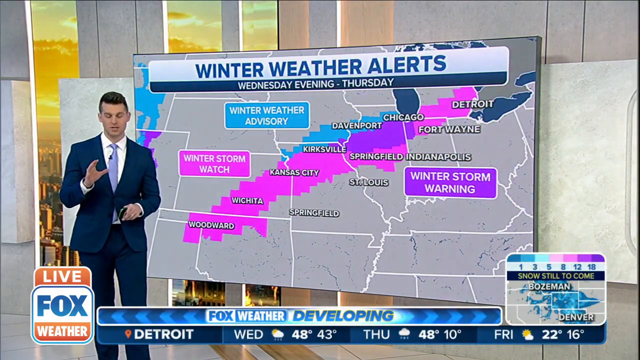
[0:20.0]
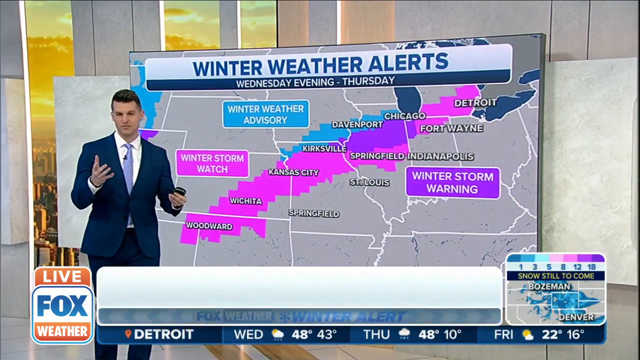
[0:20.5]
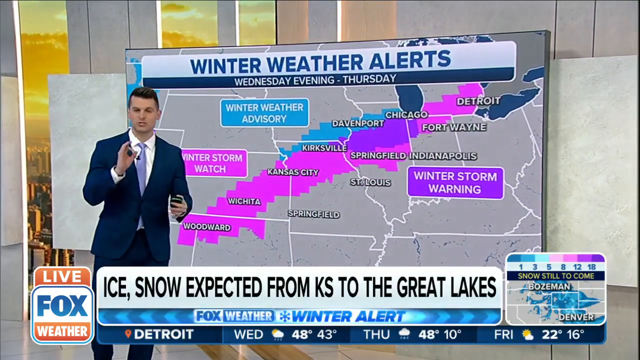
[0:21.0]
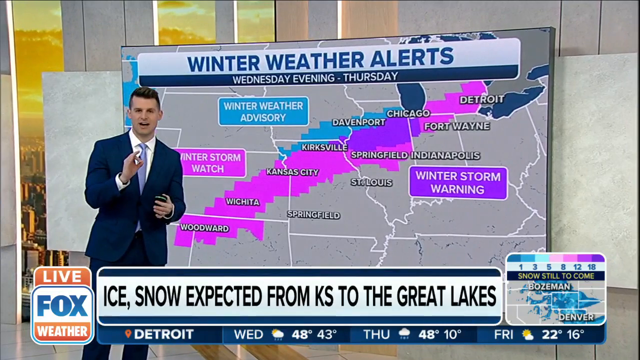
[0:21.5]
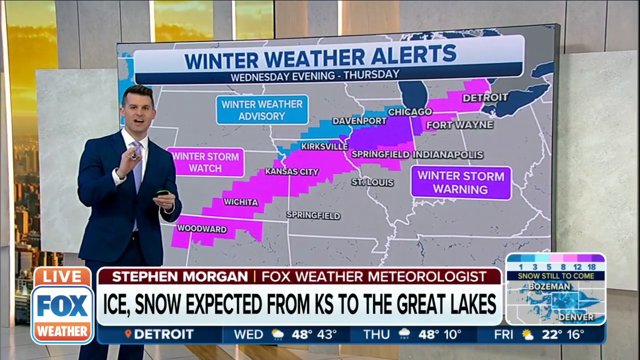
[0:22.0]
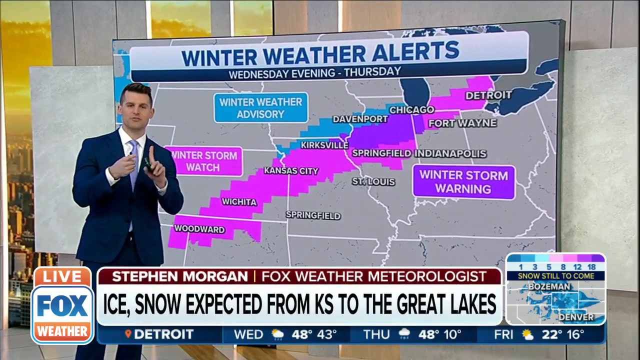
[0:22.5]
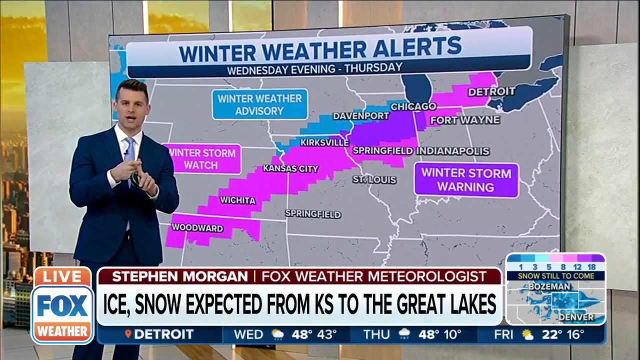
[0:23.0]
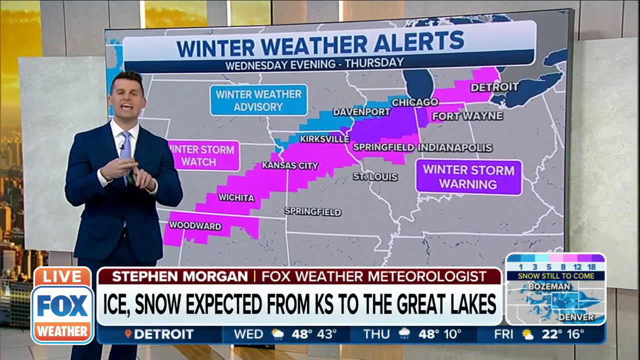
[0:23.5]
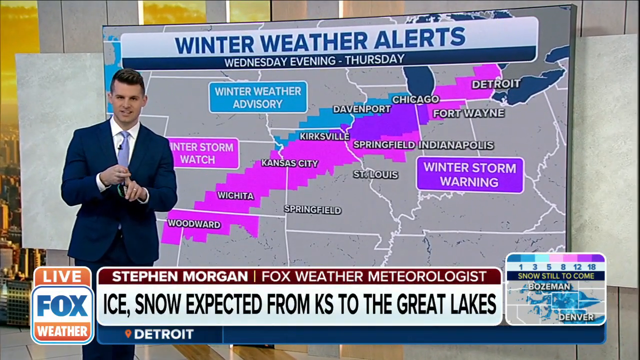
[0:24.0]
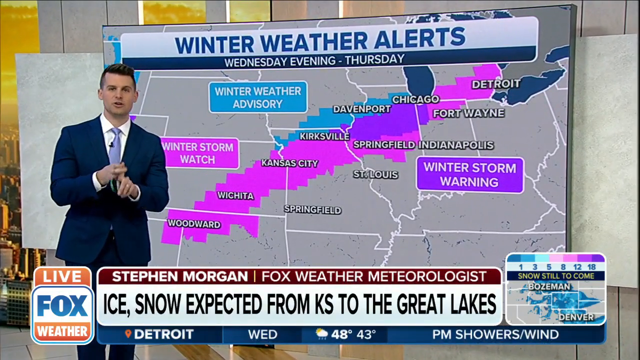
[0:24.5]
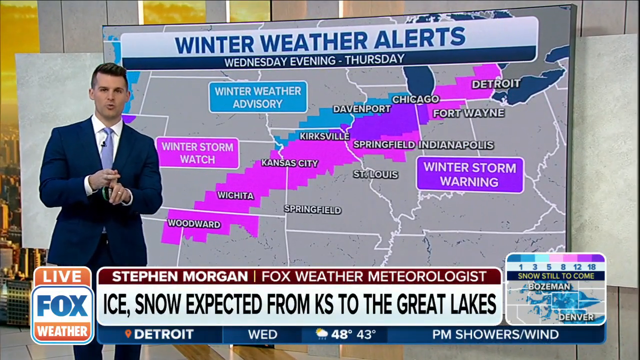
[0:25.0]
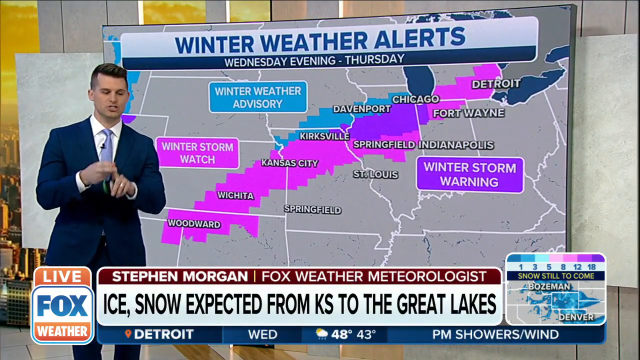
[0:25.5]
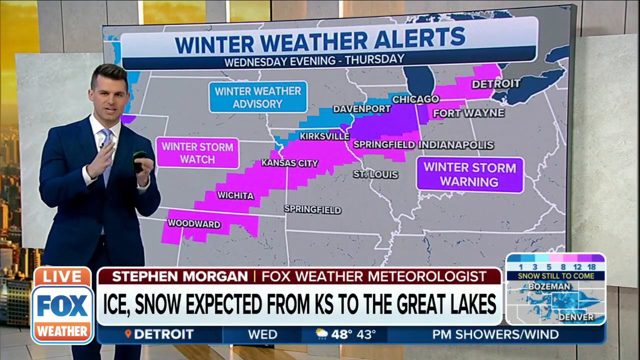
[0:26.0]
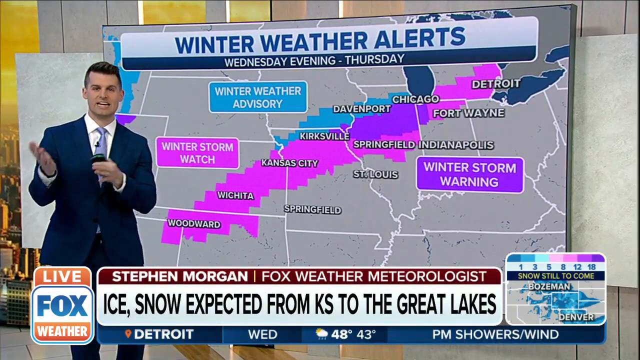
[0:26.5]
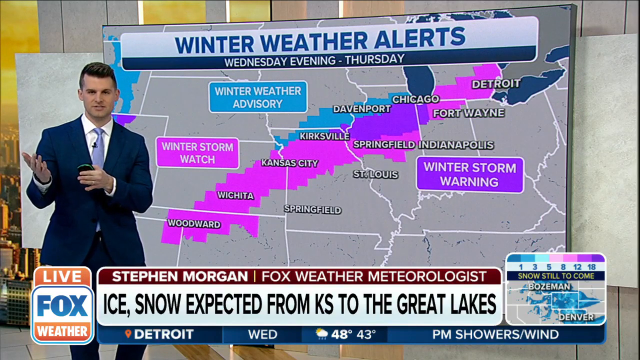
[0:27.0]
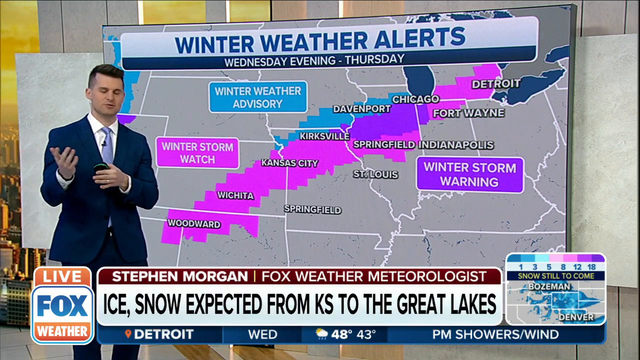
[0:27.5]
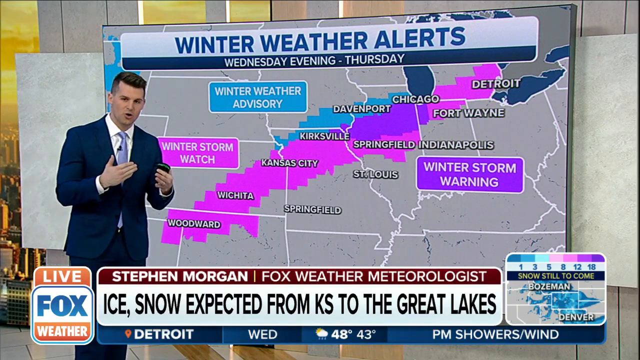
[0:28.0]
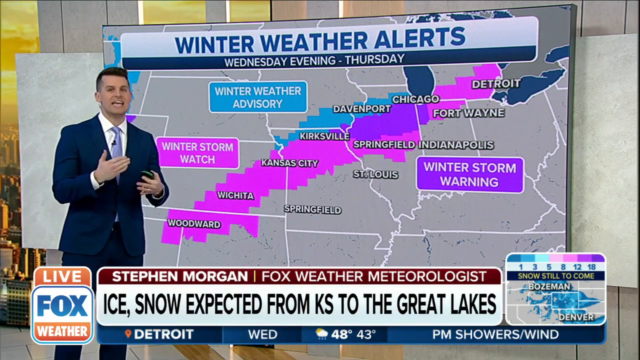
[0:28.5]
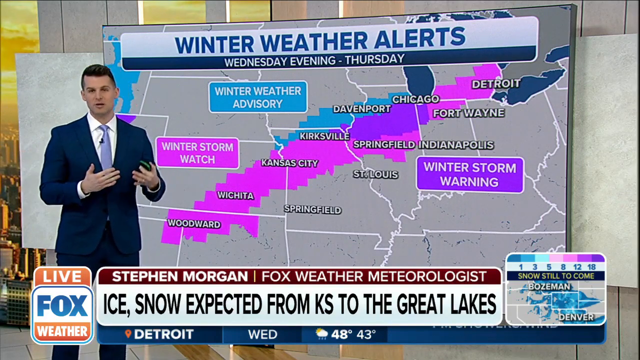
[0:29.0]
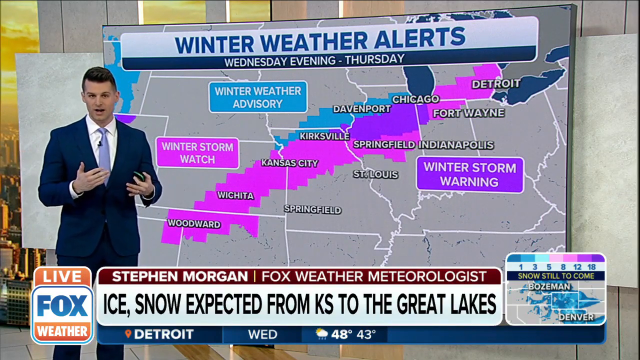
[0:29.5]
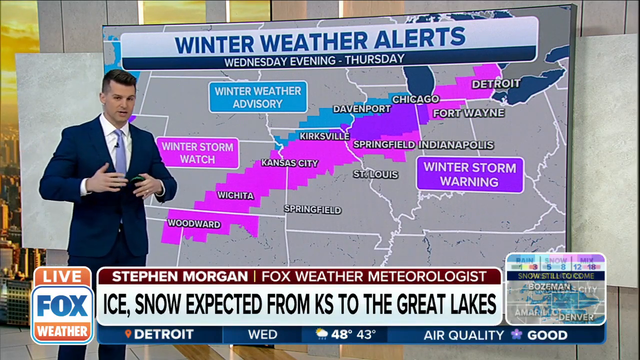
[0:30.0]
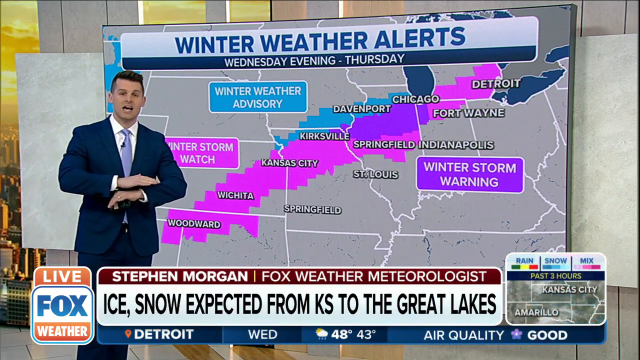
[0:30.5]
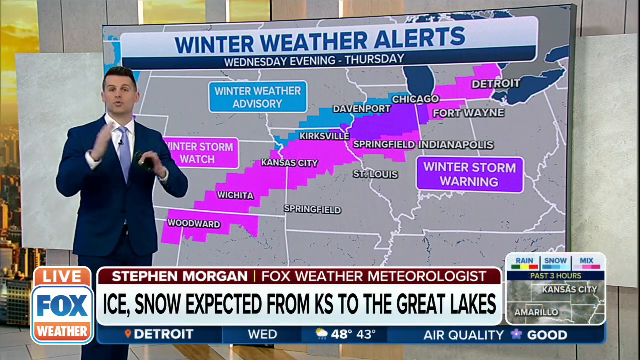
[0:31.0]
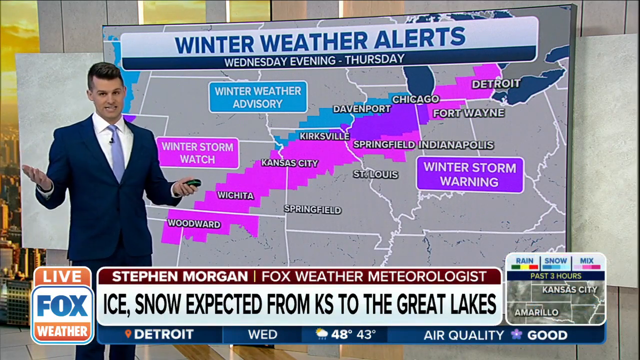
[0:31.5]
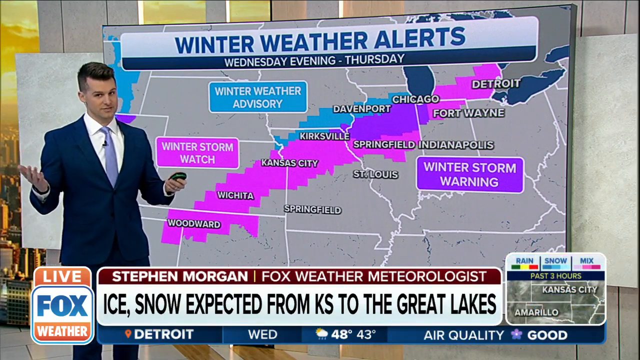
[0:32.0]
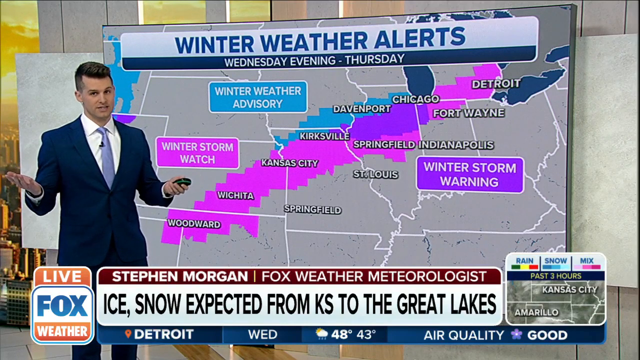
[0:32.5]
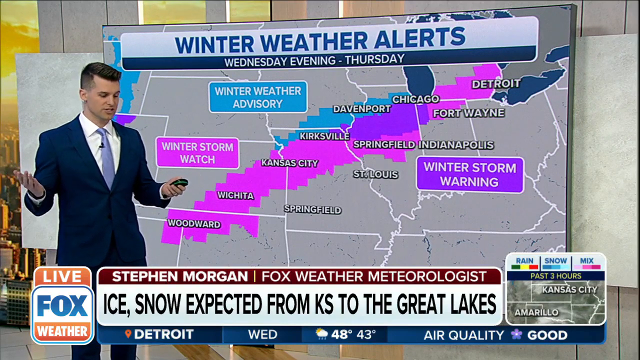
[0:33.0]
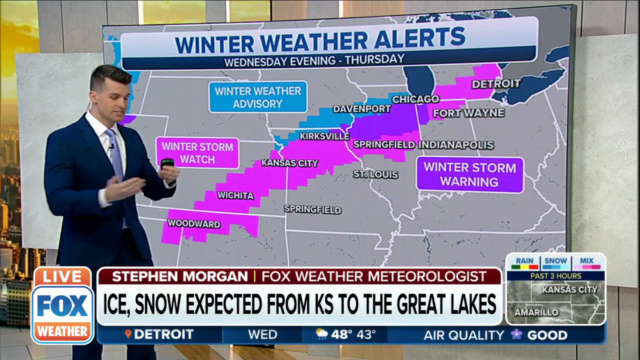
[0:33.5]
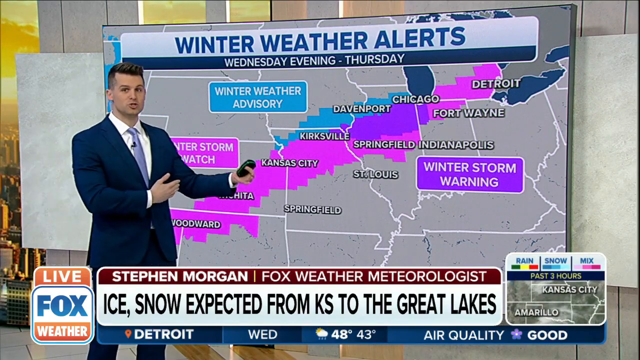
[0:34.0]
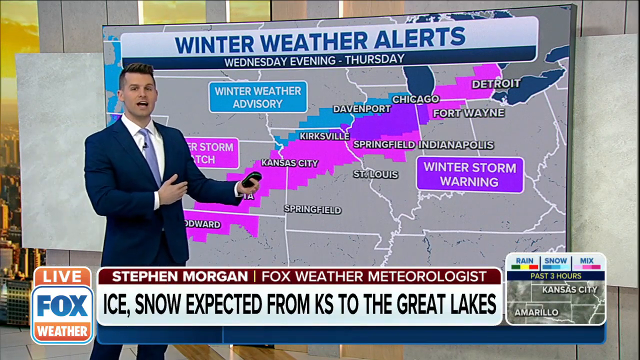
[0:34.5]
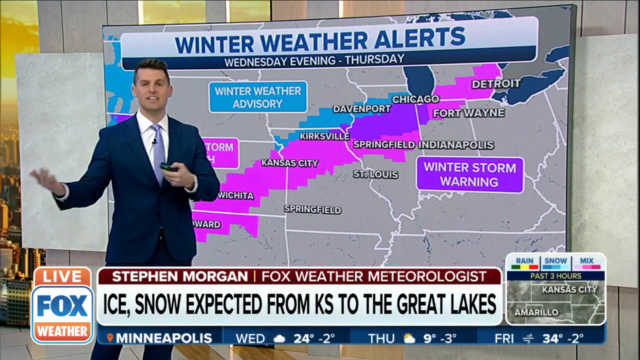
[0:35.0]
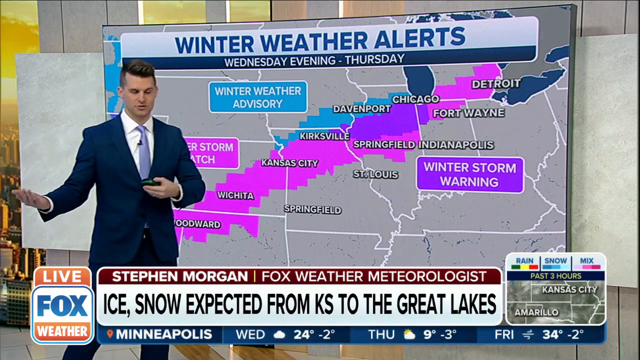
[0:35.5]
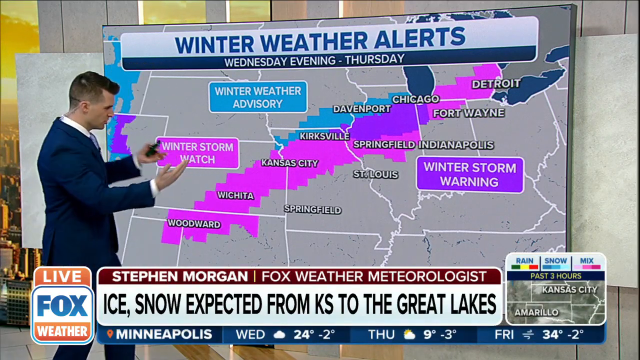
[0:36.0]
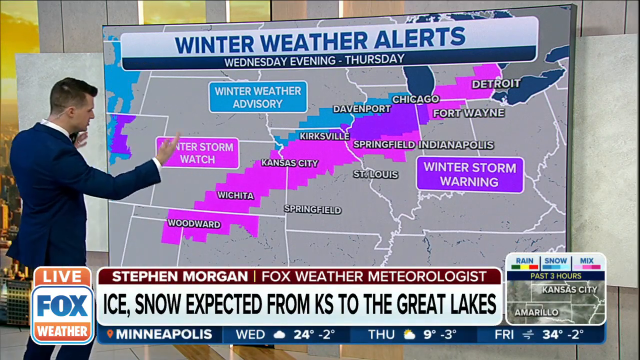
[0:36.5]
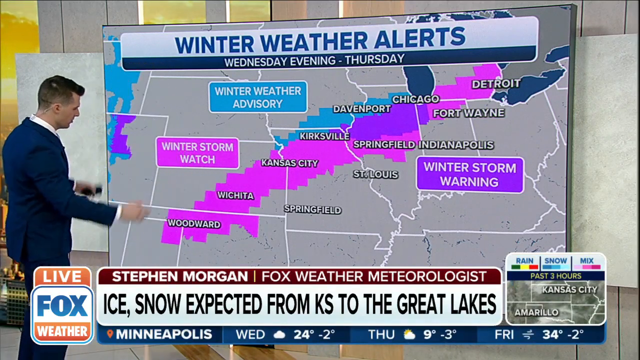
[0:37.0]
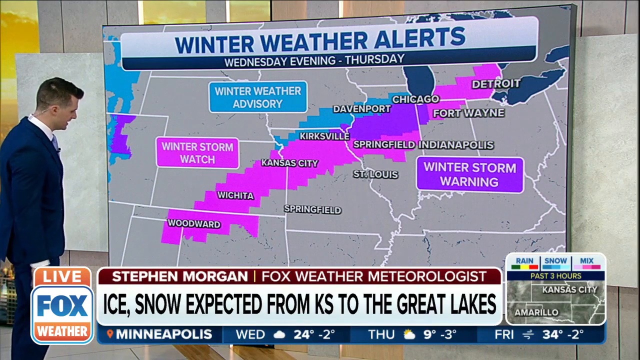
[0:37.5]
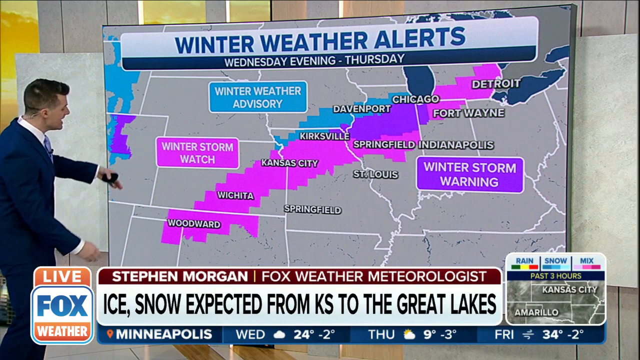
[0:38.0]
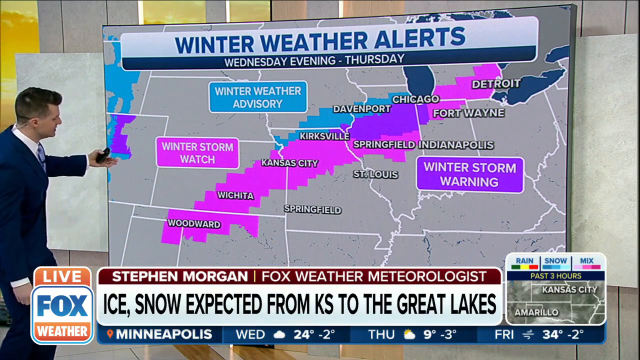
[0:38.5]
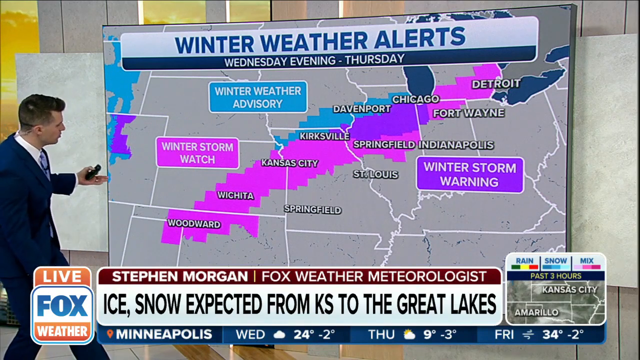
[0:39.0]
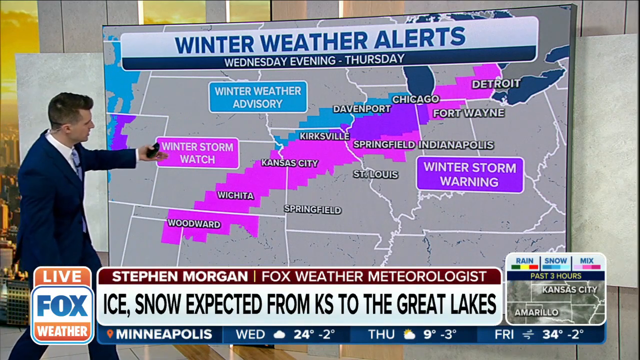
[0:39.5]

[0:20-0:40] The second meteorologist stands in front of the board, which shows a map of the Midwestern United States with a snowstorm and winter storm marked across multiple states. He uses his hands and points toward the map, outlining the line of winter storms and winter storm warnings. The storm covers mostly Oklahoma, Kansas, Nebraska, Iowa, Missouri, Indiana, Ohio, and further up into Michigan, apparently stretching a little into Canada. In the bottom right corner, a small legend shows how many inches of snow are still to come. The storm appears to affect an area called Bozeman, which looks like it might be close to Chicago. Winter storm watches, winter weather advisories, and winter storm warnings appear throughout the Midwest.